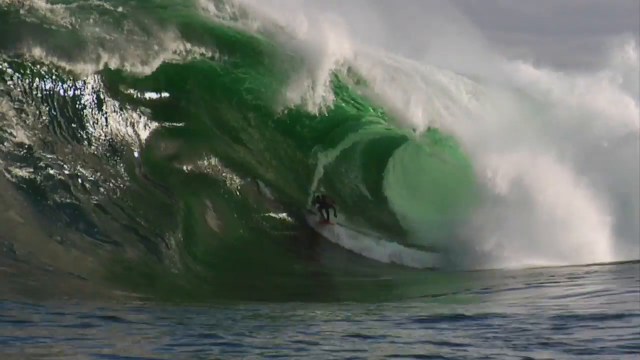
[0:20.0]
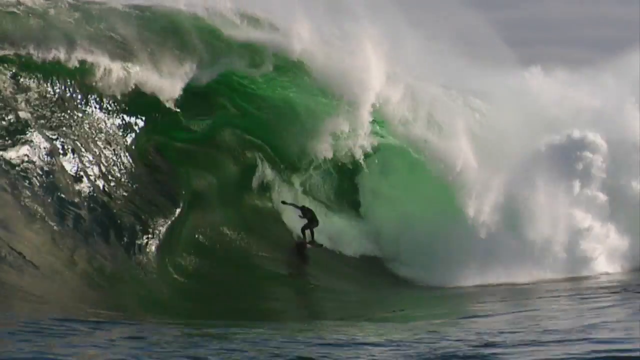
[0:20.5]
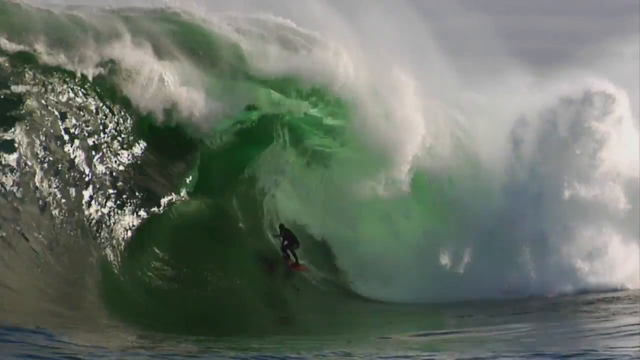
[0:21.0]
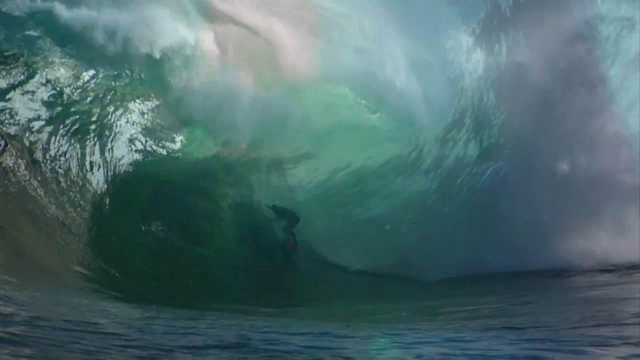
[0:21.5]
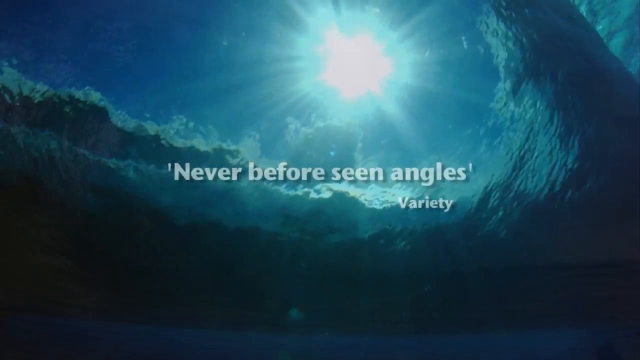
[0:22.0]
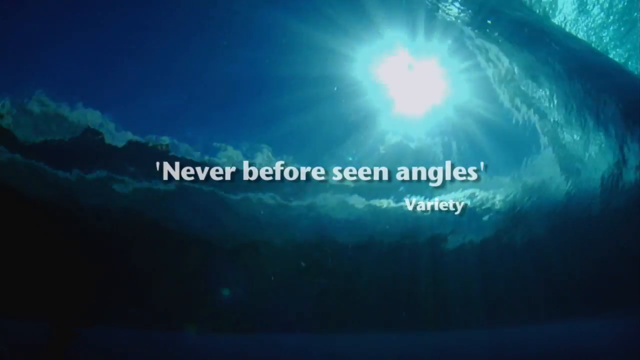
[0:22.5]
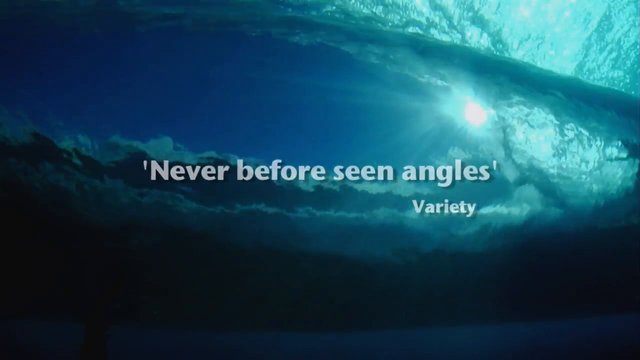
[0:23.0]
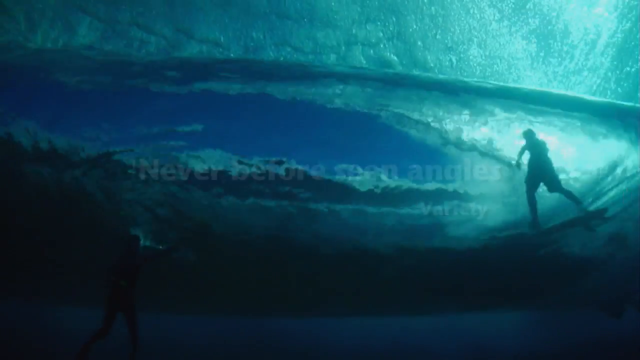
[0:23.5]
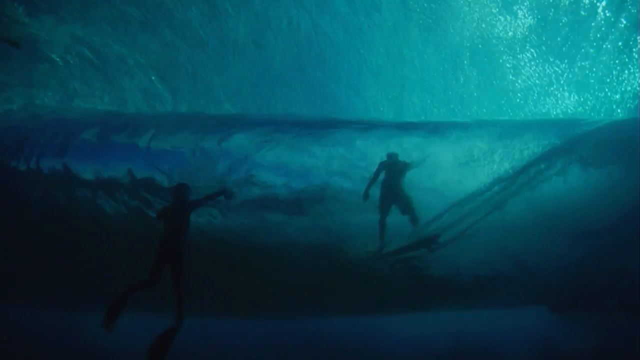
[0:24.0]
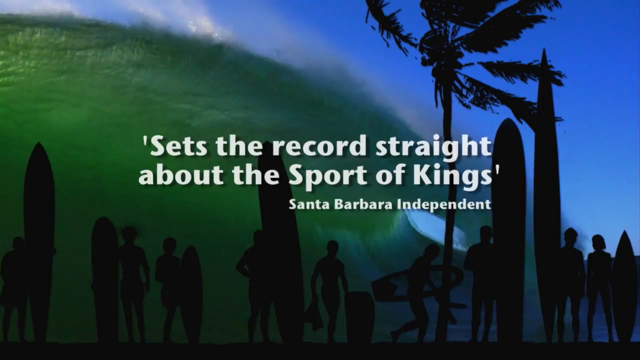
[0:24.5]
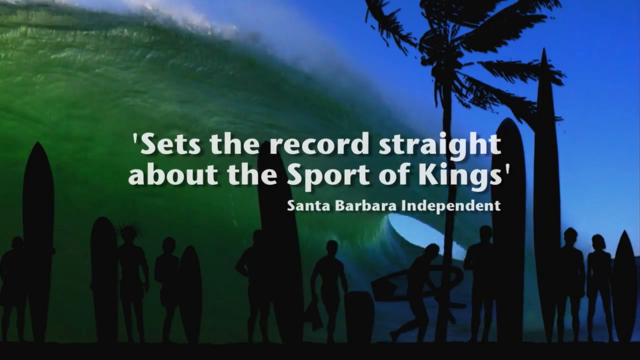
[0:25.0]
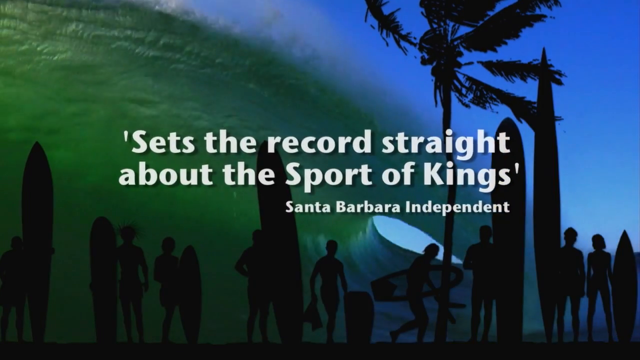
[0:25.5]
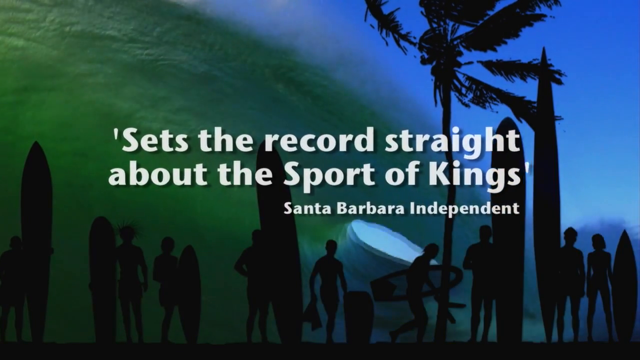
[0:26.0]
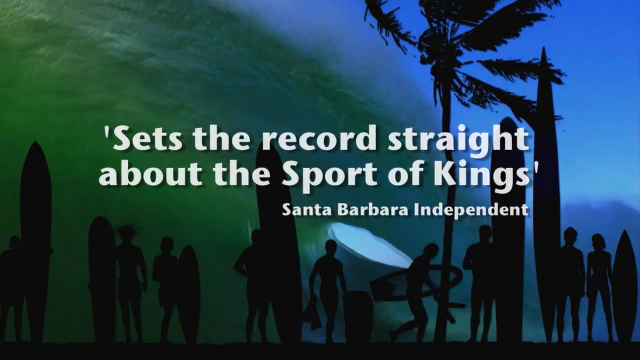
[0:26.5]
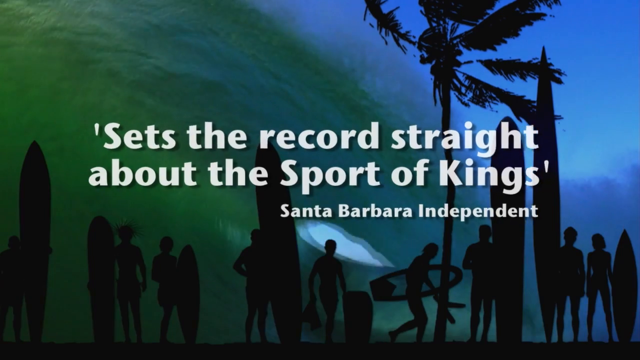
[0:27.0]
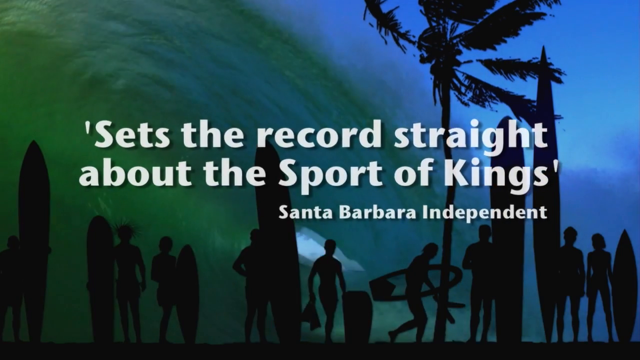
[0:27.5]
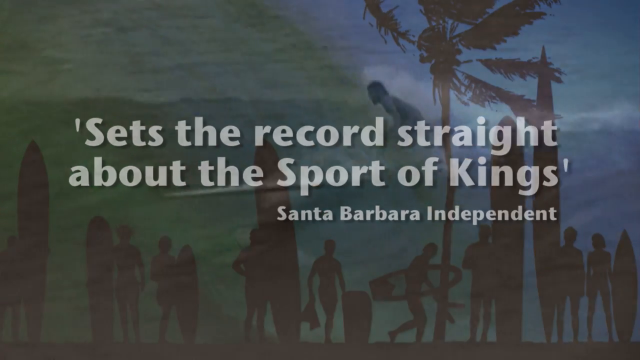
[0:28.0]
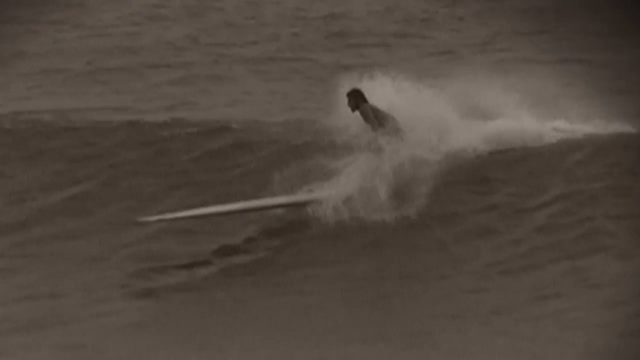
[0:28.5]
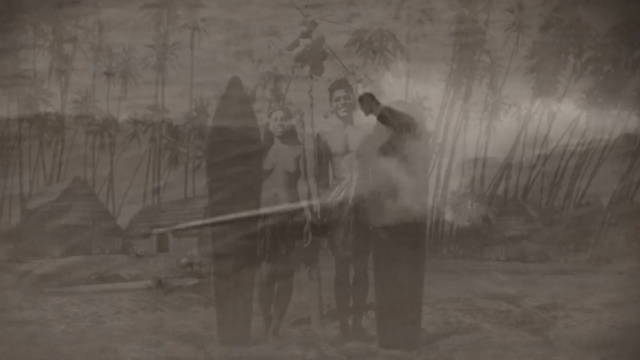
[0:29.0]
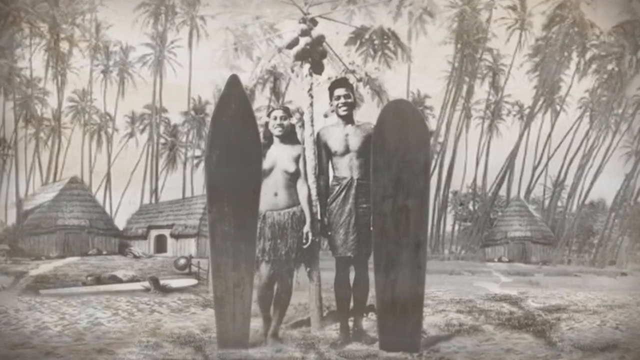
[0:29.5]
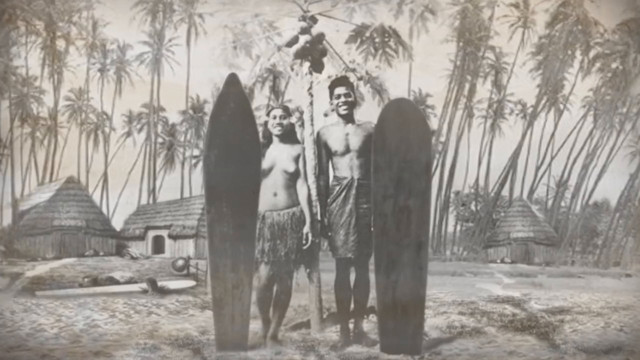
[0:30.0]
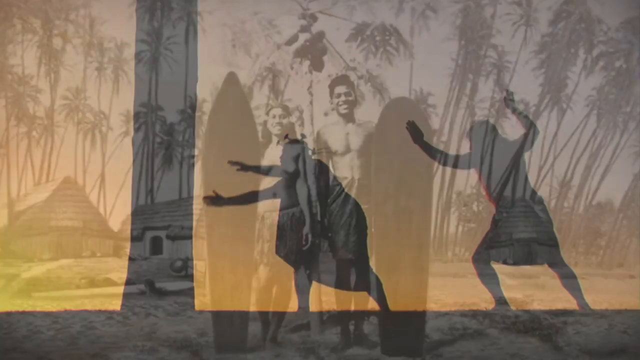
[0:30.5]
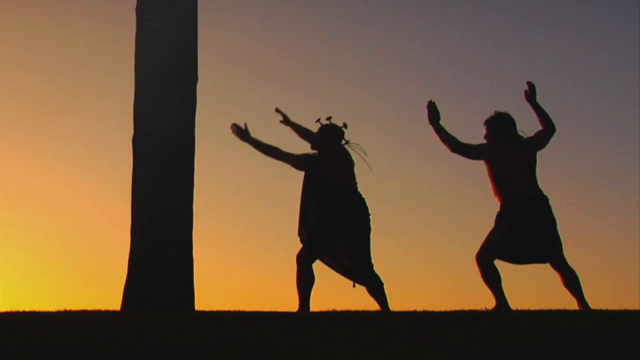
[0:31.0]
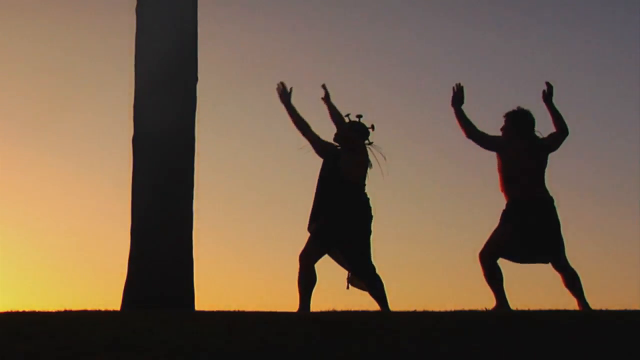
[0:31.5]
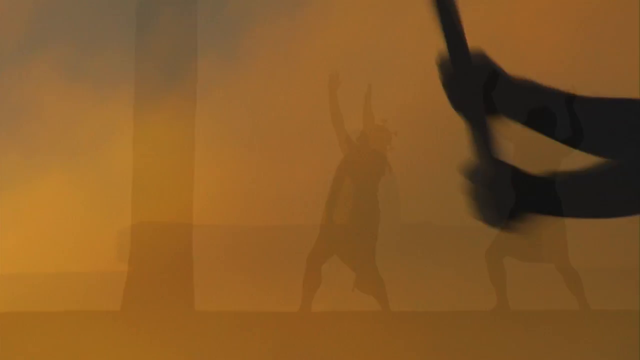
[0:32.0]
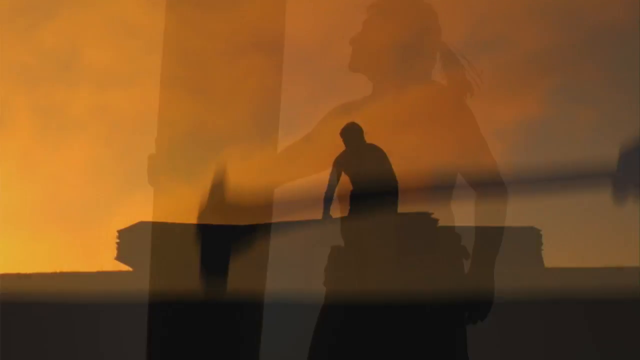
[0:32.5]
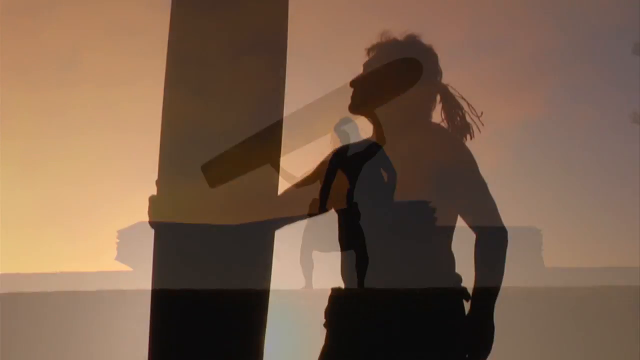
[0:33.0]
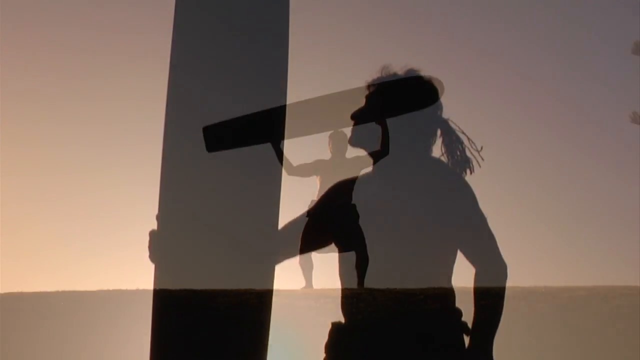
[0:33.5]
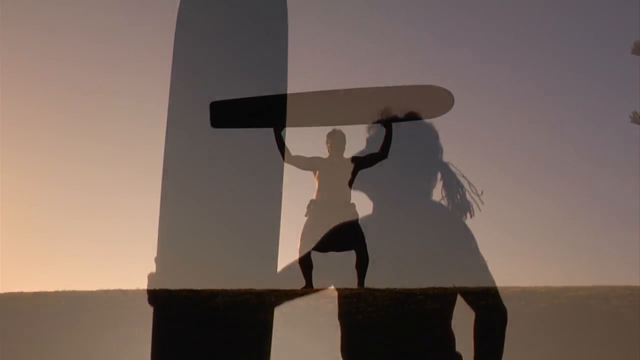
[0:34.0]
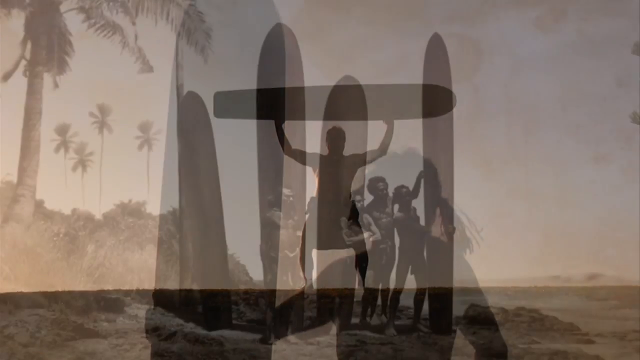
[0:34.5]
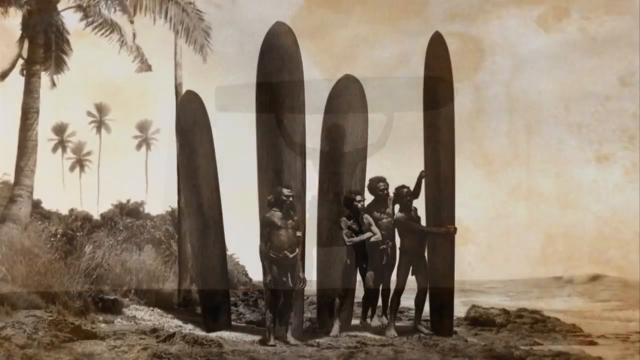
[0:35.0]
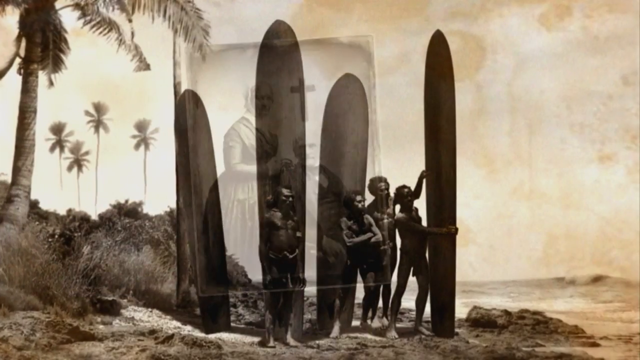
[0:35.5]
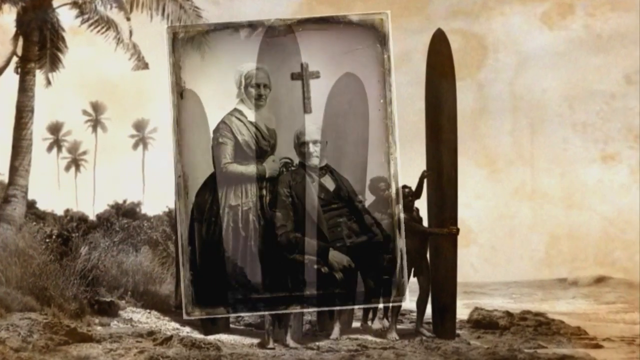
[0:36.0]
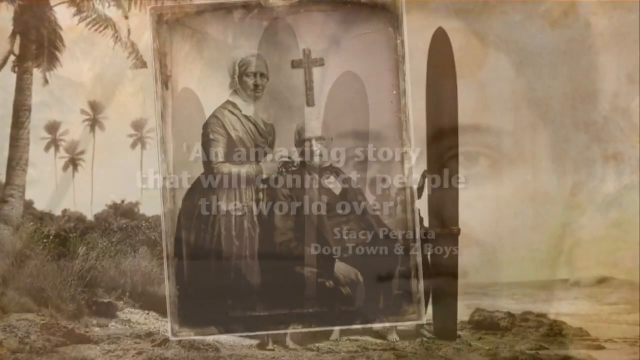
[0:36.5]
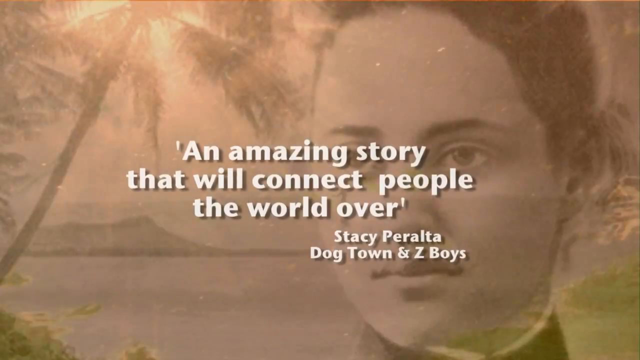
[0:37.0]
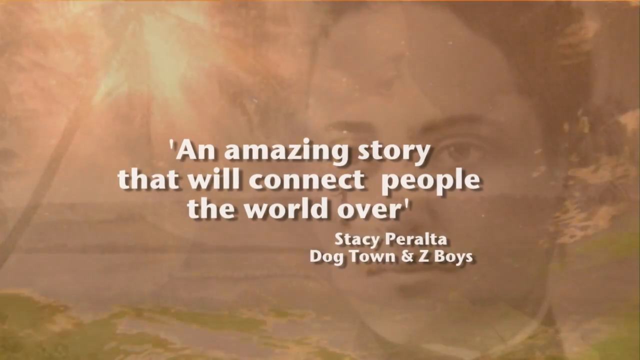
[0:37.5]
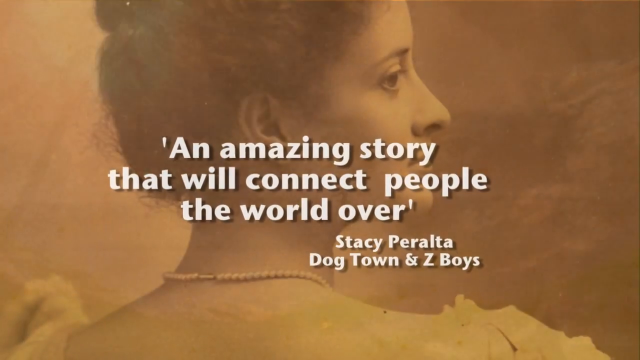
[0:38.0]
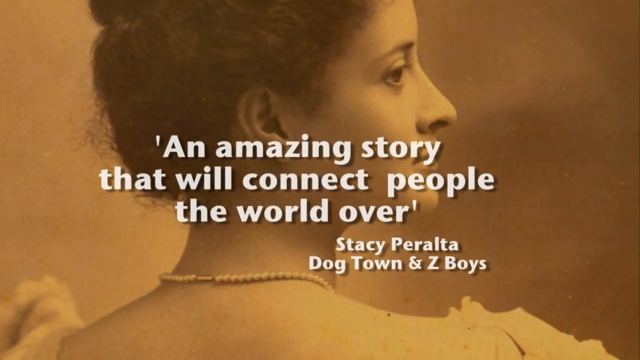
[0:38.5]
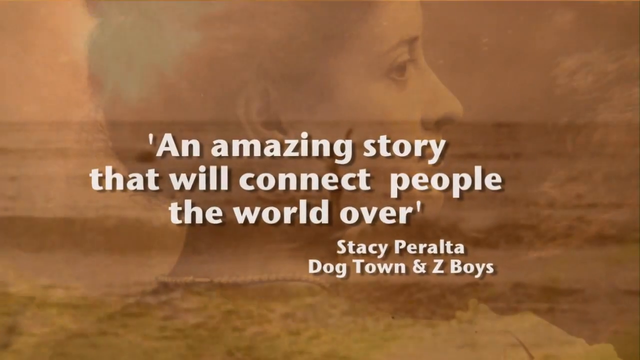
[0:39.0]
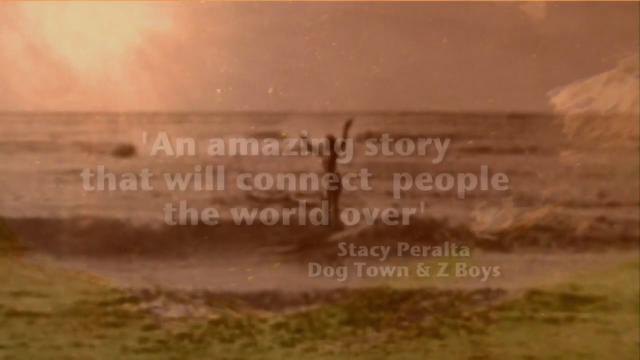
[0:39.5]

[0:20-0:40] A man surfs in the midst of a huge crashing wave, with foamy white clouds of water shooting up like clouds in the sky. A quote from Variety appears, saying "never-before-seen angles", and the Santa Barbara Independent says "sets the record straight about the sport of kings". Behind these quotes is a silhouetted image of many surfers holding up surfboards, perhaps 10 people and four surfboards, with a palm tree behind them, in black on a blue background to give the illusion of a silhouette. Someone surfs along. An image shows two people standing with surfboards, the woman appearing to be topless, with some huts and very tall trees behind them. Two people in silhouette are sort of dancing or moving, perhaps in a Maui fashion, against a dusky night sky, with a black silhouetted tree on the left of the image. A man or a woman hammers something, then holds a surfboard aloft above their head. An image shows four people stood with four surfboards, and another shows two people with a Christian cross above their heads. A quote appears saying "an amazing story that will connect people the world over", attributed to Stacey Peralta, Dogtown and Zed Boys.